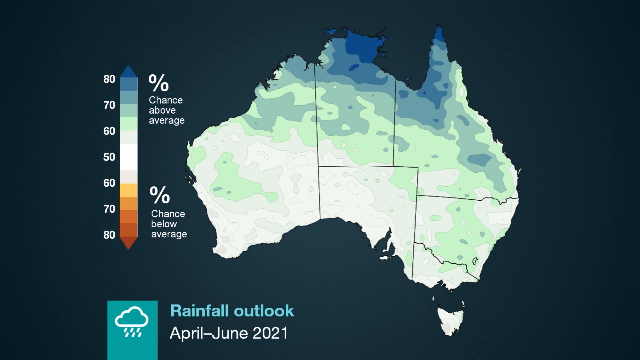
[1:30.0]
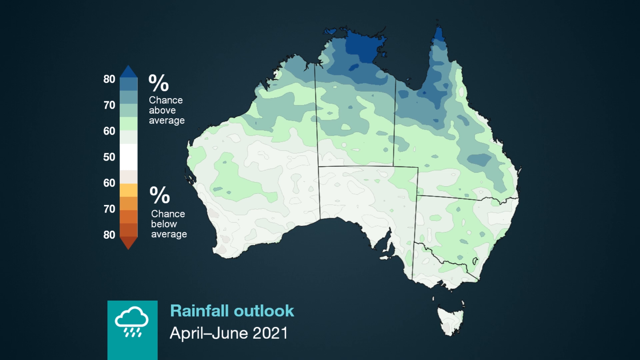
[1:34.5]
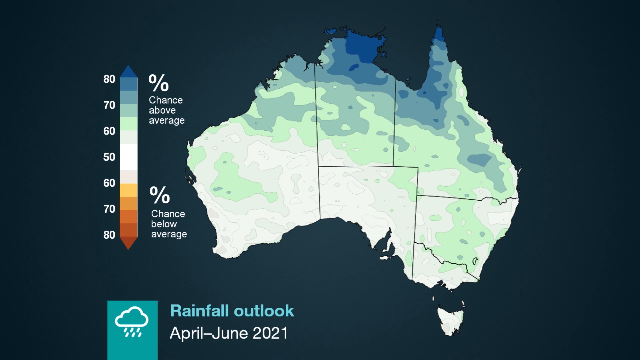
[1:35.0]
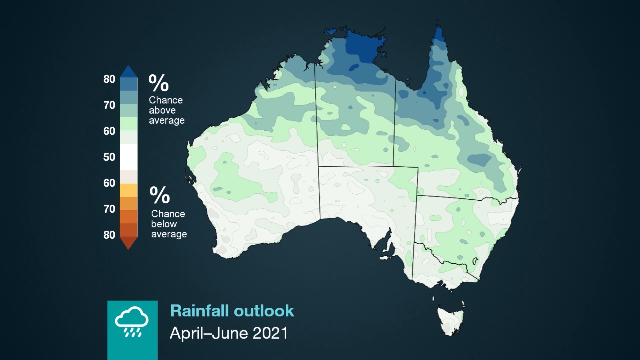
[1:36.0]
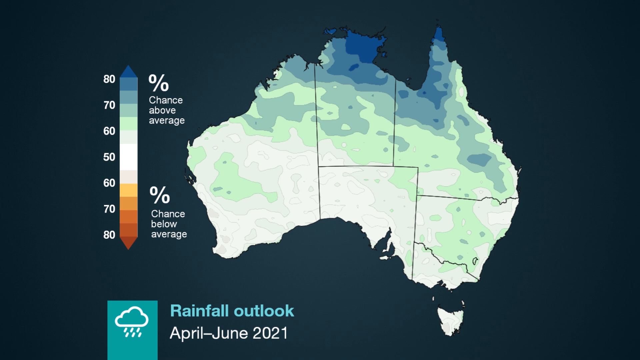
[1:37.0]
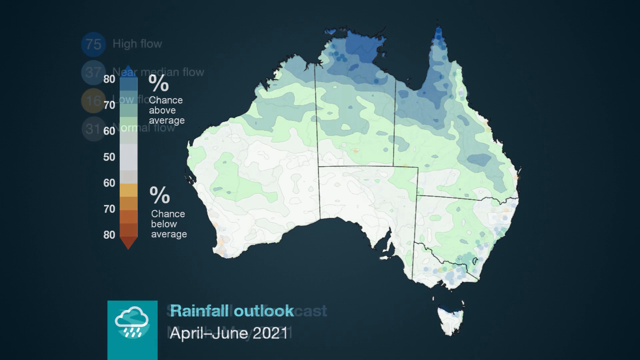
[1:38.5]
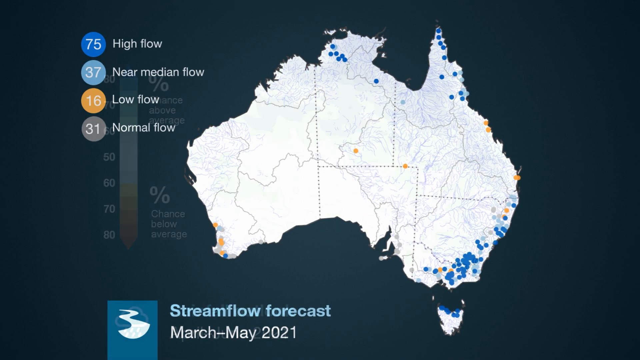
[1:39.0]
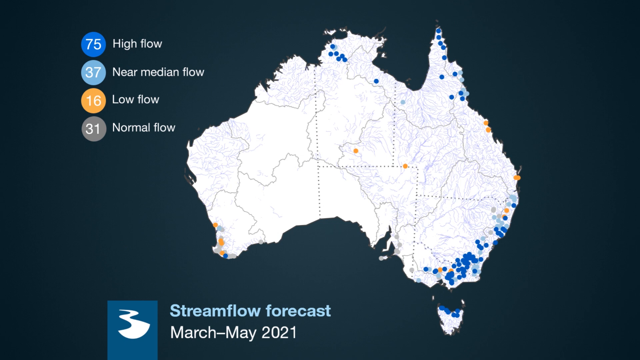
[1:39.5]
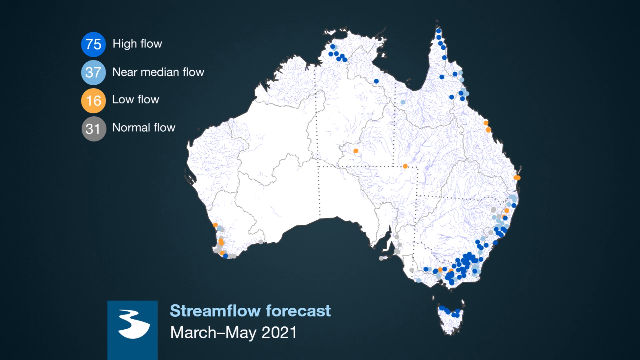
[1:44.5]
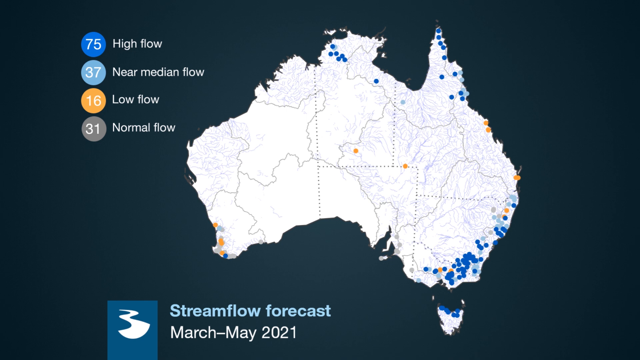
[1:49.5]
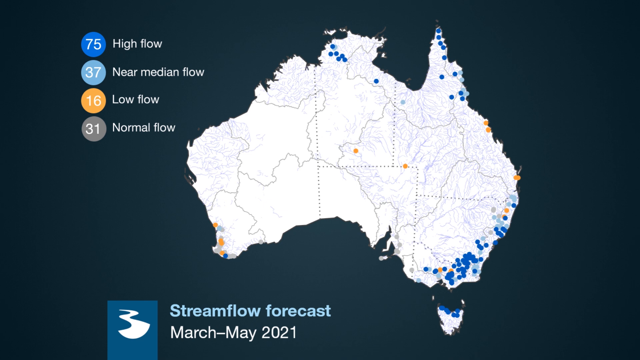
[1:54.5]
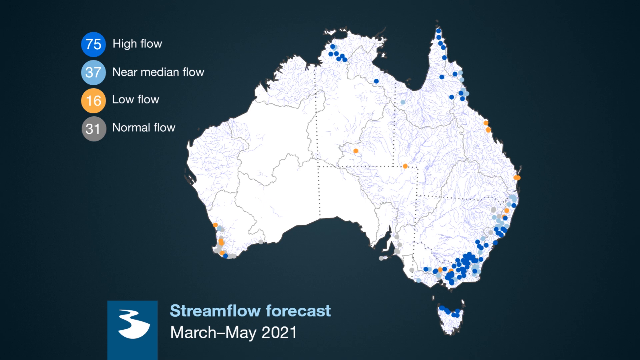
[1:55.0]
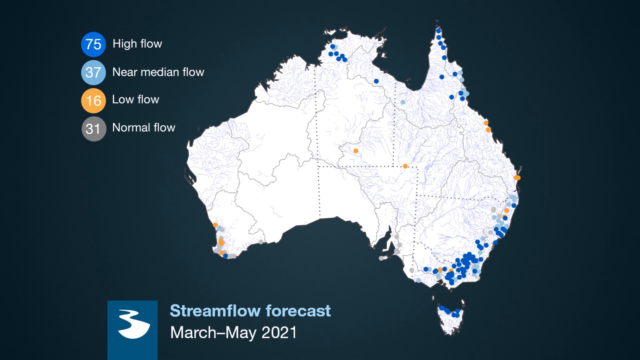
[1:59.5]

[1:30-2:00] A map of Australia shows the rainfall outlook from April to June 2021, with colours representing expected rainfall ranging from navy through light green and white to yellow, orange and darker orange at the other end of the spectrum. The video then changes to a streamflow forecast map of Australia for March to May 2021. A key on the left-hand side shows four circles for different streamflow levels: a blue circle for high flow, a light blue one for near medium flow, an orange one for low flow, and a gray one for normal flow. Various dots are sprinkled across the map of Australia, with a concentration of dark blue dots in the southeast region.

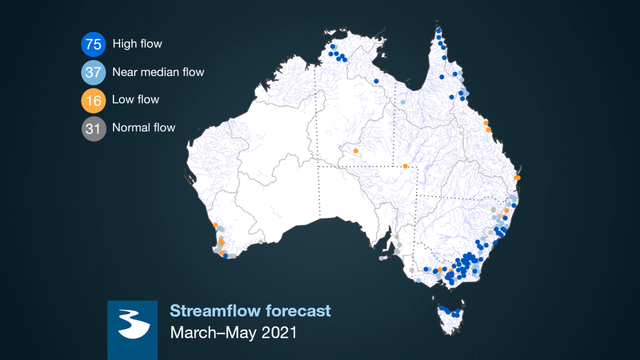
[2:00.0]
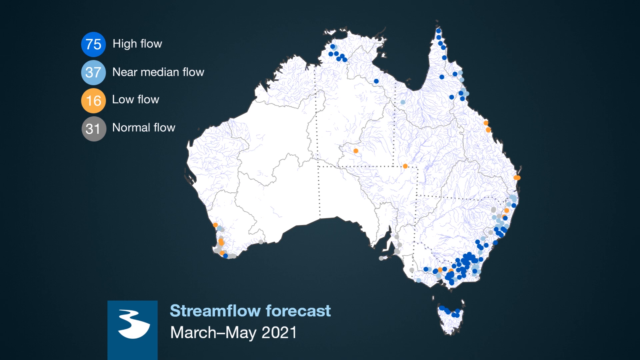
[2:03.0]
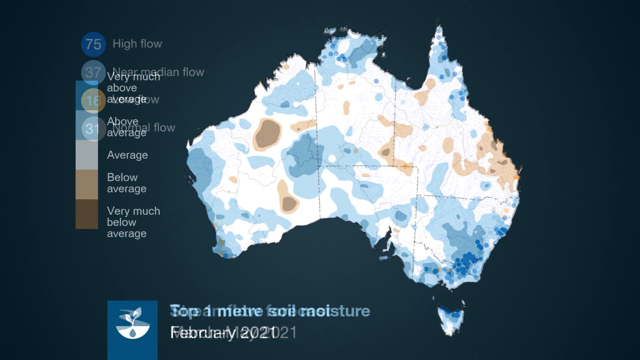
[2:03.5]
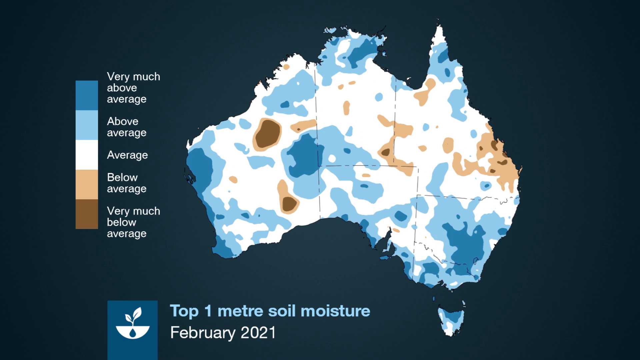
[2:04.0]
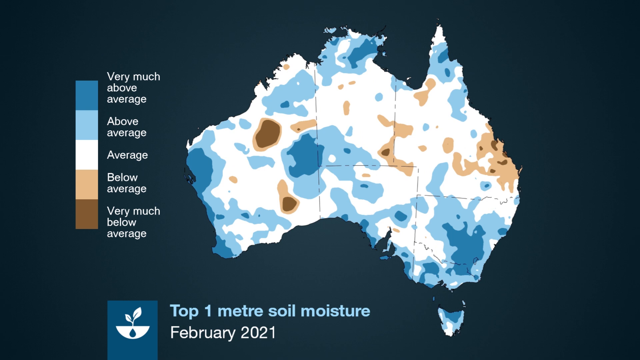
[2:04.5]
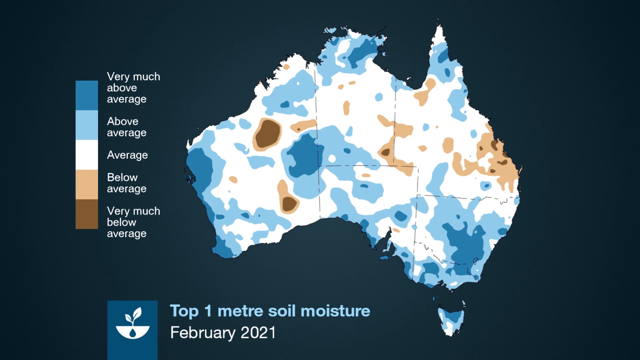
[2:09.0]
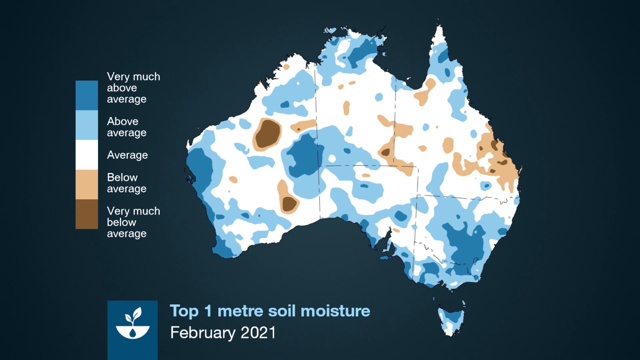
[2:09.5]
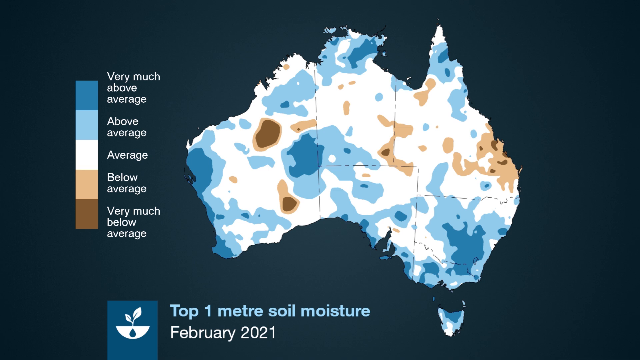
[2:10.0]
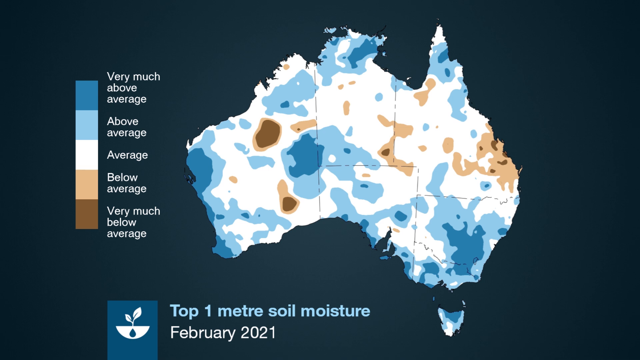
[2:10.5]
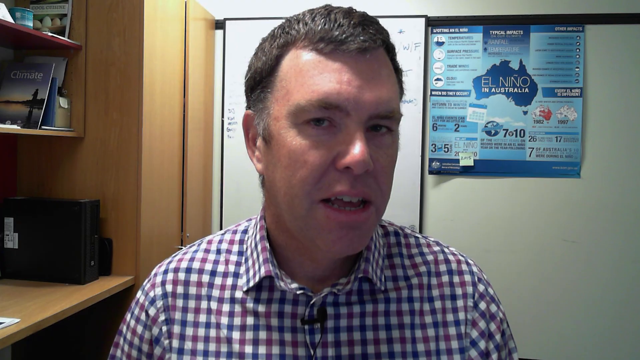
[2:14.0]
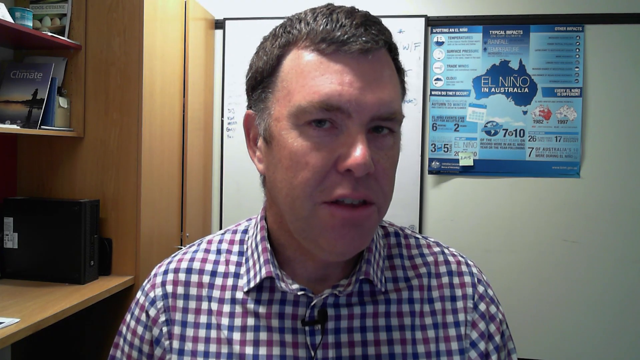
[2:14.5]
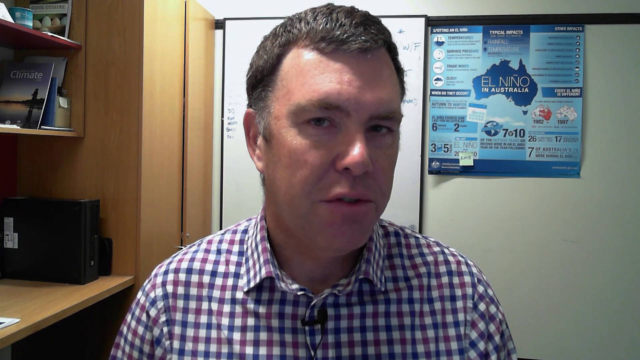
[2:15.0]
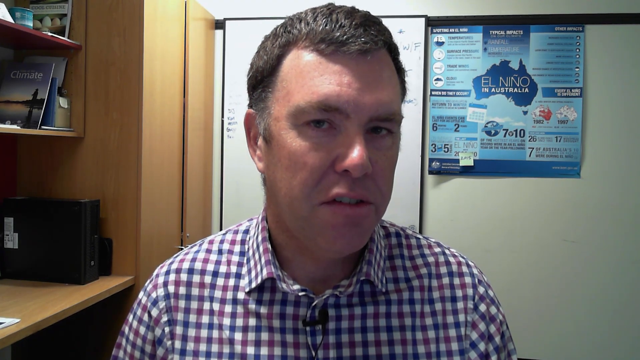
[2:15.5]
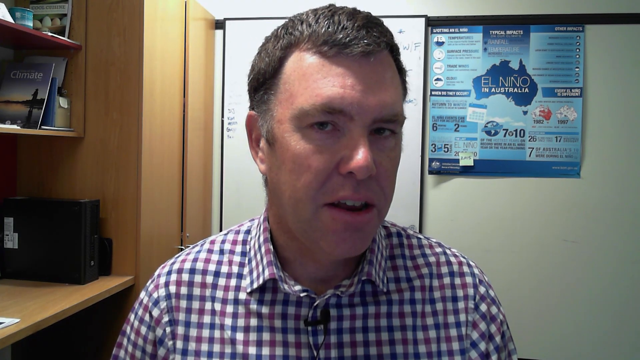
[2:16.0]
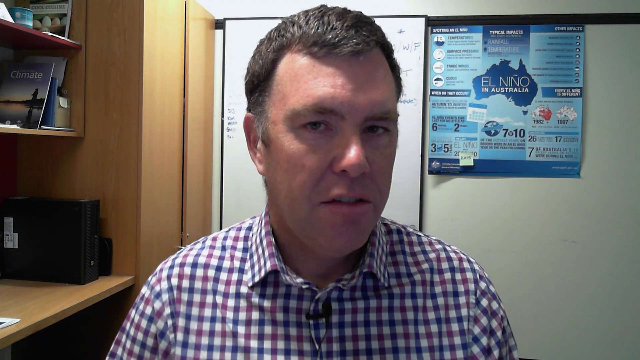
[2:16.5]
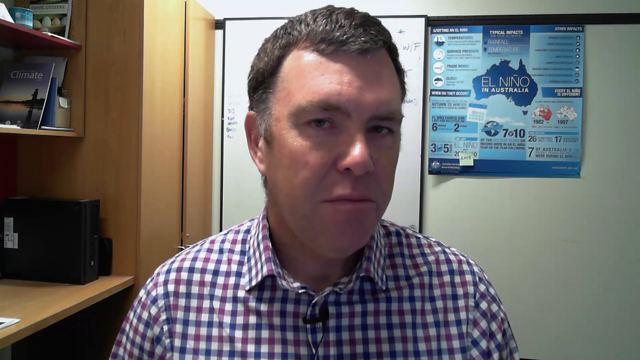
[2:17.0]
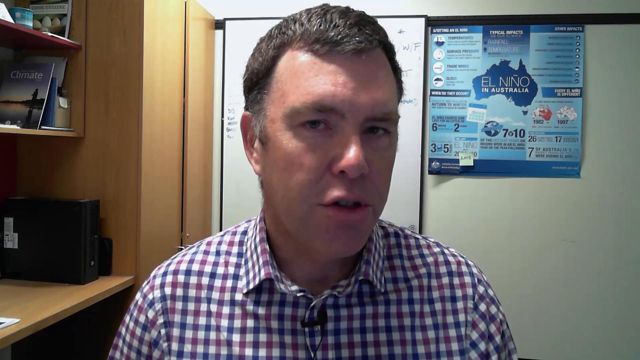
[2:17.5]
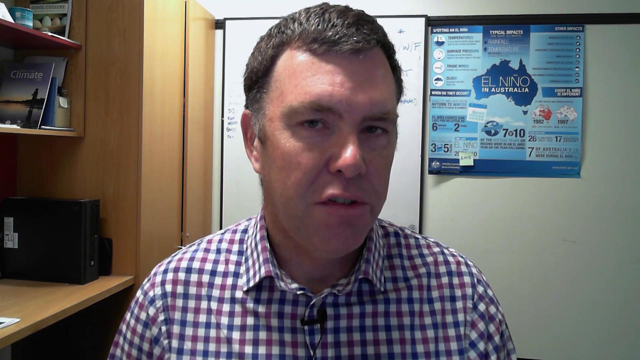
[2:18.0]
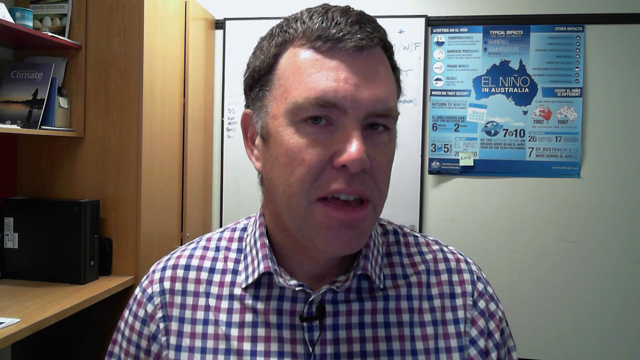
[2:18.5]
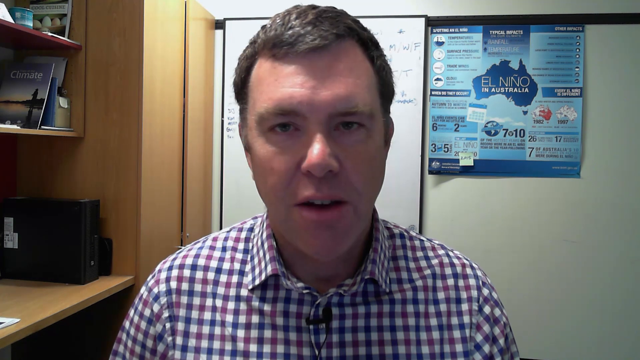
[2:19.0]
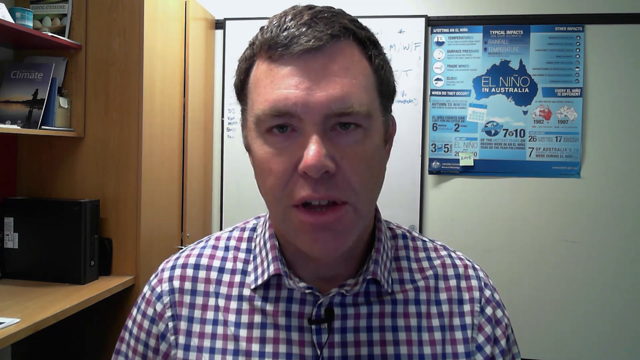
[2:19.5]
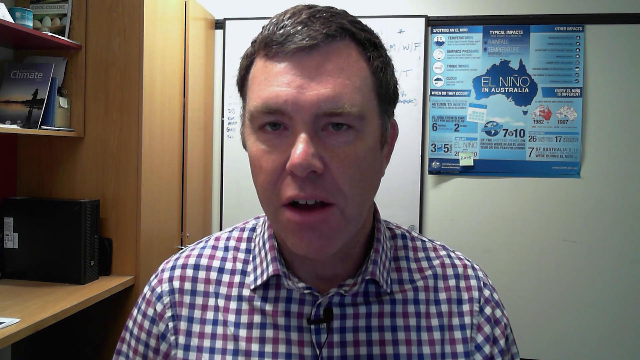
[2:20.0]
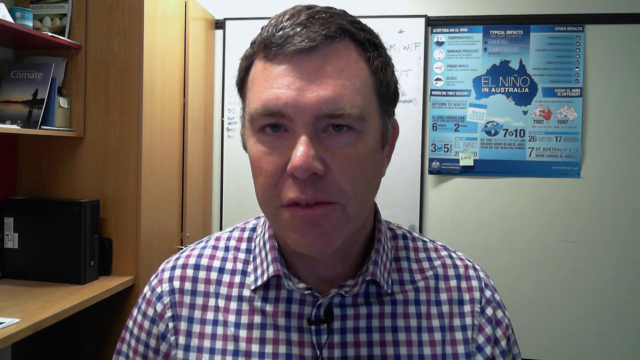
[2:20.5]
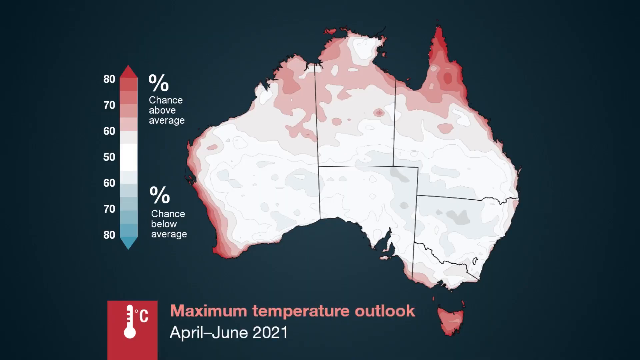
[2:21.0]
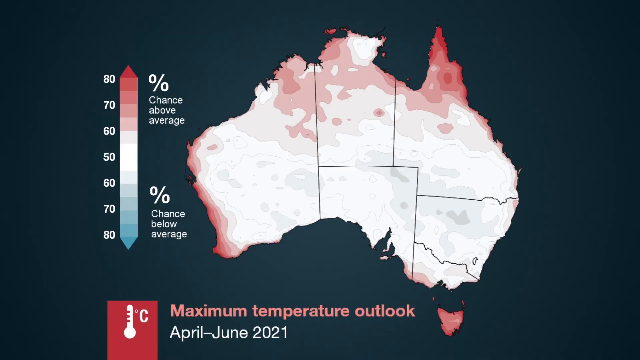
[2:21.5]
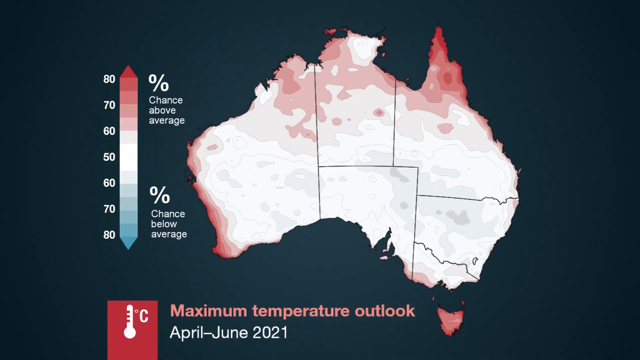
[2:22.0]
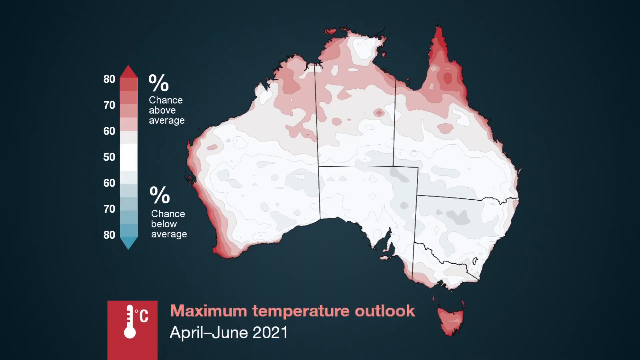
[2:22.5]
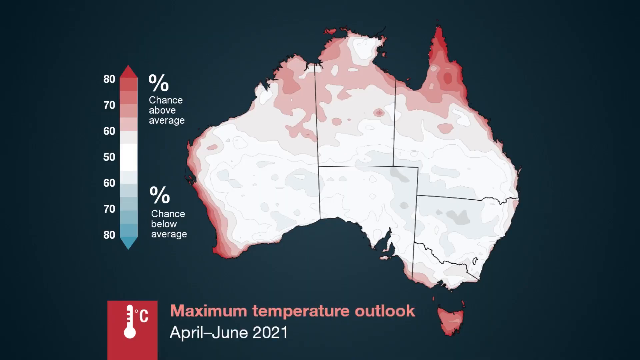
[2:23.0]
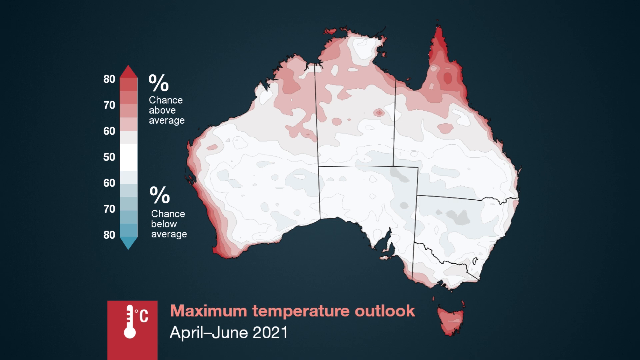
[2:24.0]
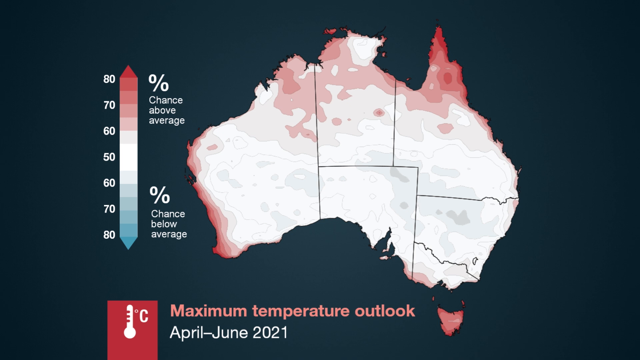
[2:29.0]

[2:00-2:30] A streamflow forecast for March to May 2021 is shown, with four coloured symbols across the map of Australia. It transitions to a map of the top one metre soil moisture for February 2020-2021 in Australia, with categories of very much above average, above average, average, below average and very much below average shown as different colours on the map. The video then cuts to interview footage of the climatologist speaking from his office, with a small microphone on the front of his shirt and a whiteboard behind him; he moves his head and neck slightly as he speaks. Next comes another map of Australia showing the maximum temperature outlook for April to June 2021. The northern regions clearly show the highest temperatures, with the scale running from 80 on the blue side to 80 on the orange side, and the upper northern sections of Australia shaded the most orange.